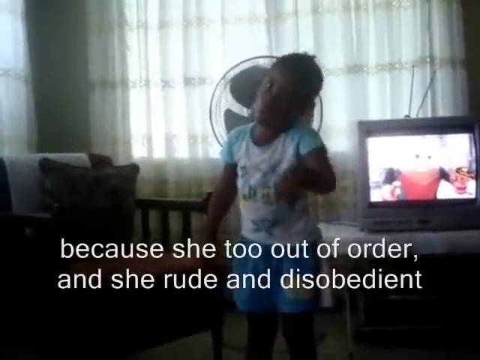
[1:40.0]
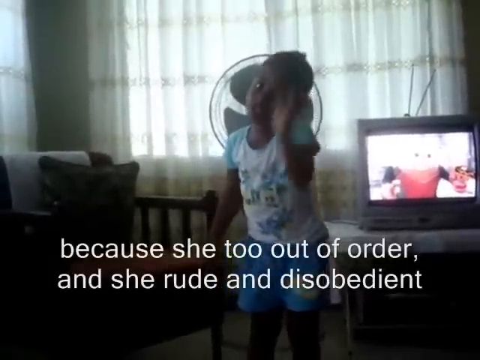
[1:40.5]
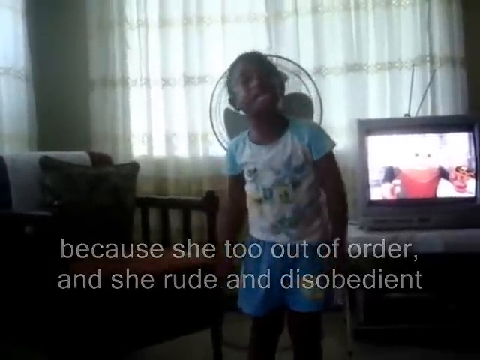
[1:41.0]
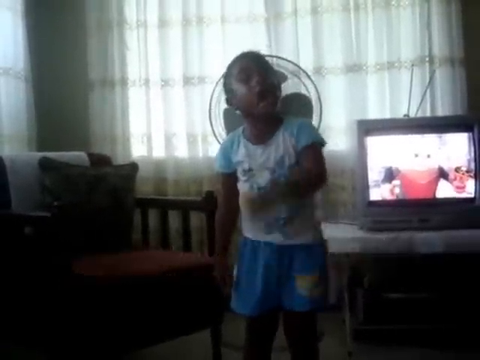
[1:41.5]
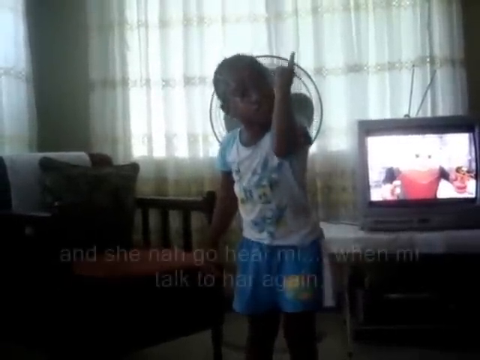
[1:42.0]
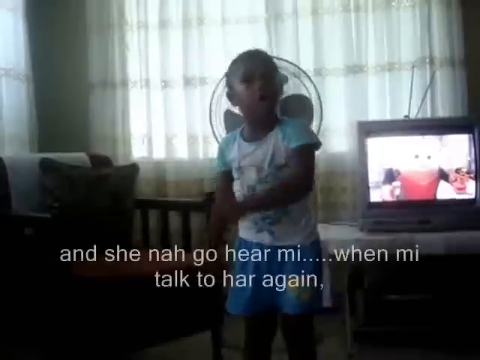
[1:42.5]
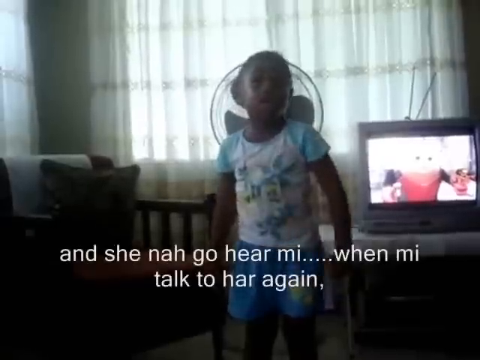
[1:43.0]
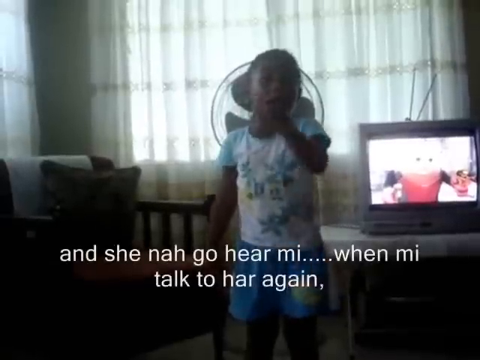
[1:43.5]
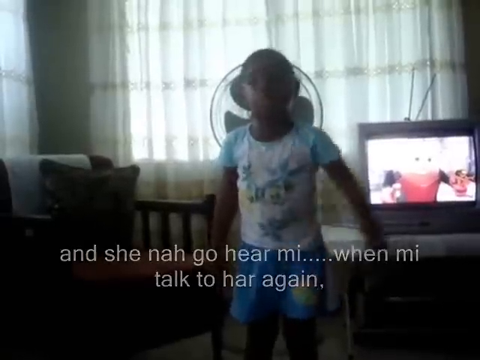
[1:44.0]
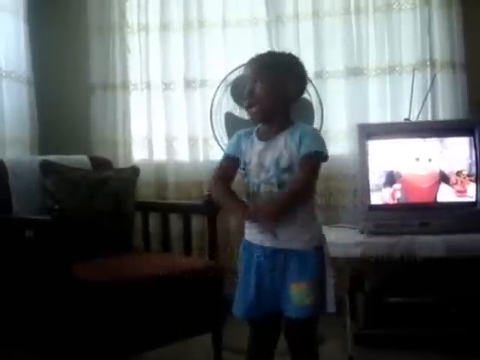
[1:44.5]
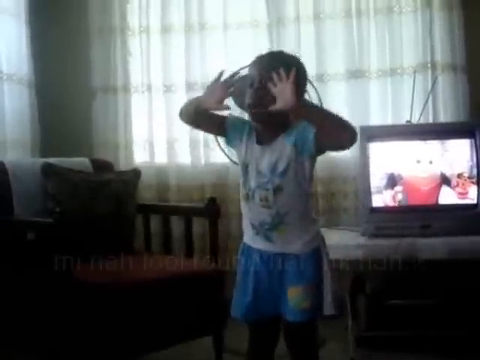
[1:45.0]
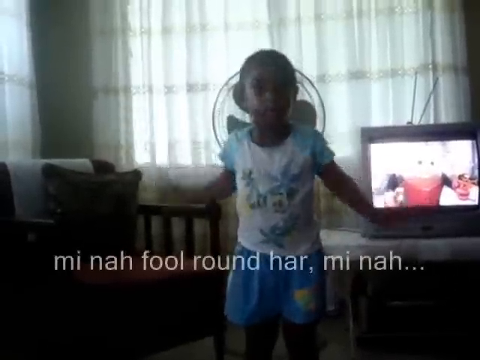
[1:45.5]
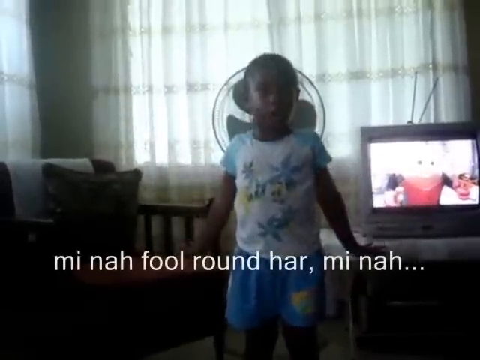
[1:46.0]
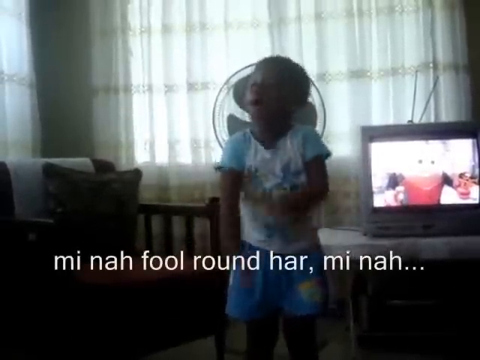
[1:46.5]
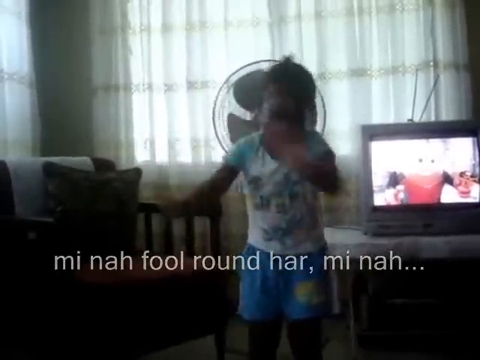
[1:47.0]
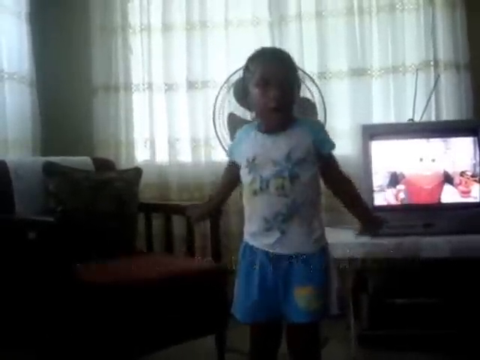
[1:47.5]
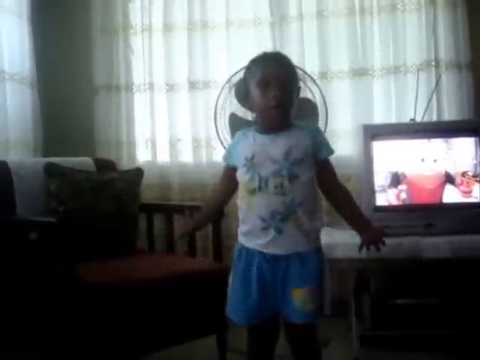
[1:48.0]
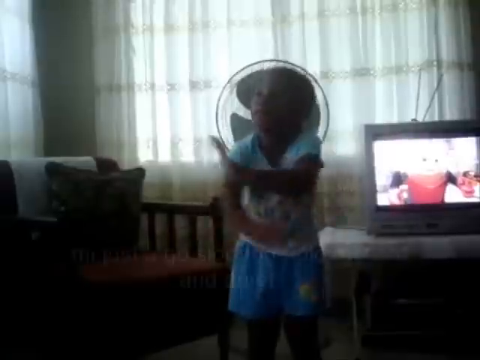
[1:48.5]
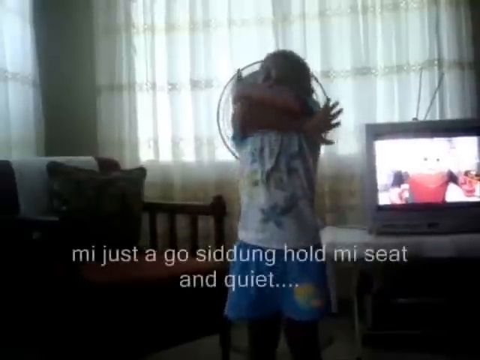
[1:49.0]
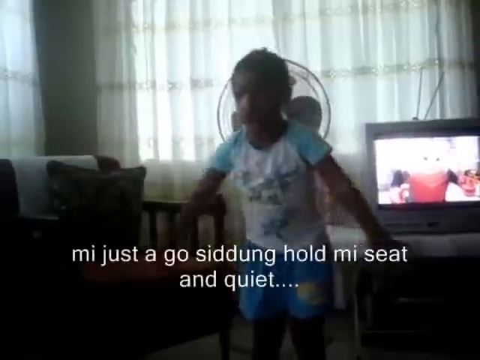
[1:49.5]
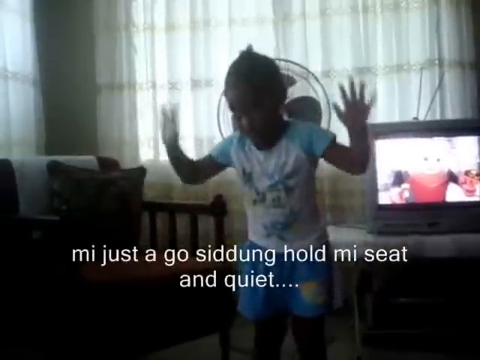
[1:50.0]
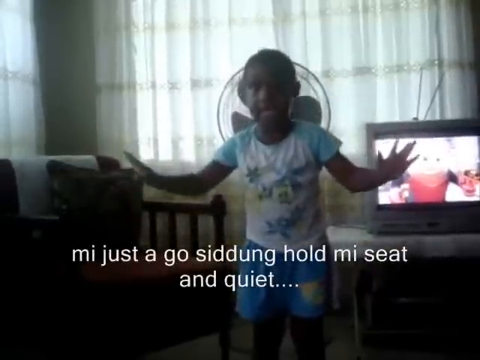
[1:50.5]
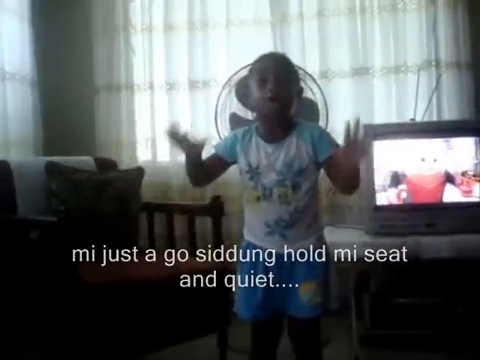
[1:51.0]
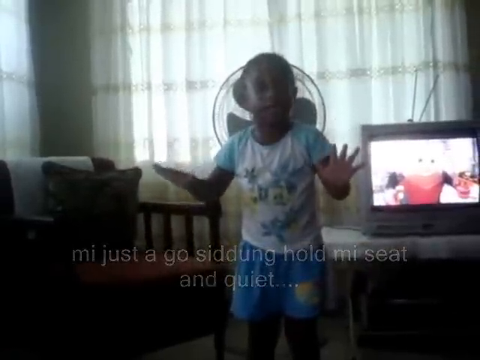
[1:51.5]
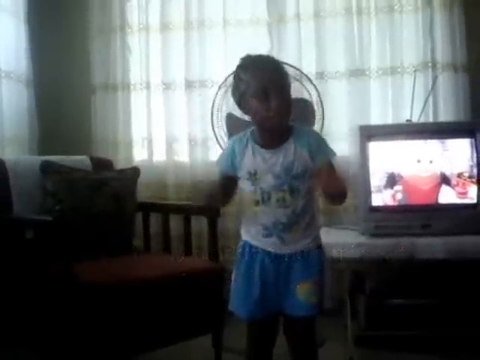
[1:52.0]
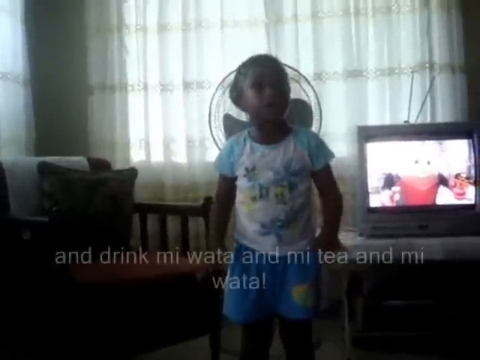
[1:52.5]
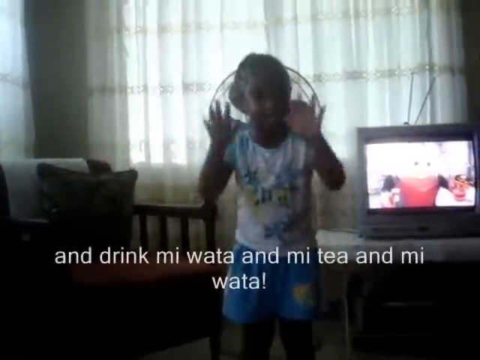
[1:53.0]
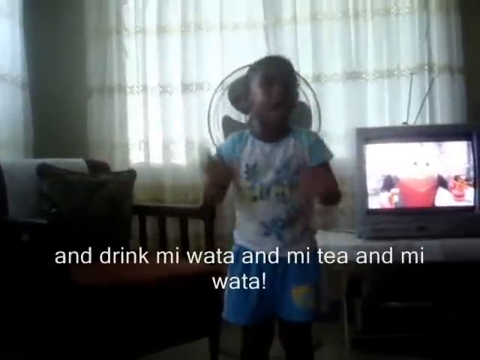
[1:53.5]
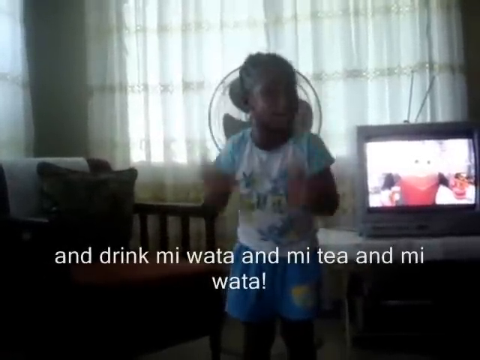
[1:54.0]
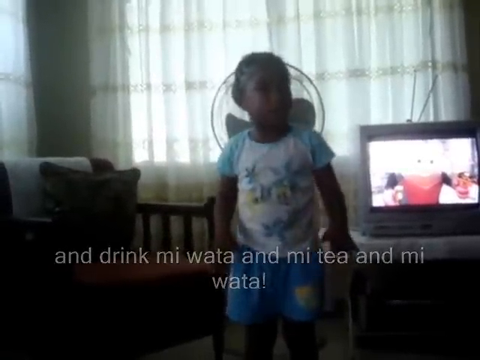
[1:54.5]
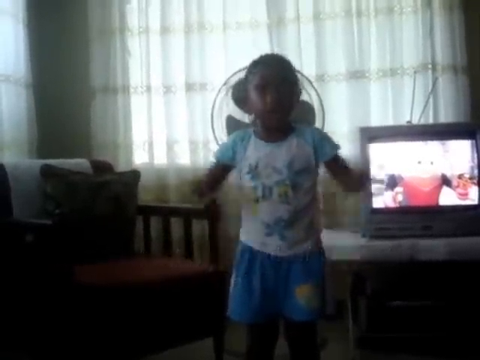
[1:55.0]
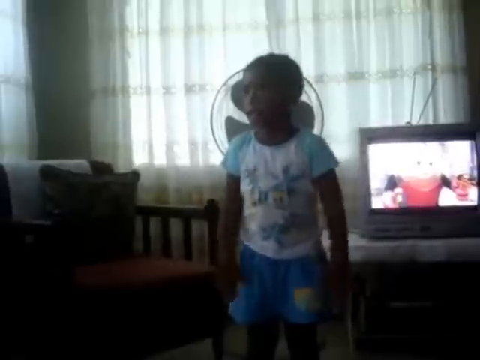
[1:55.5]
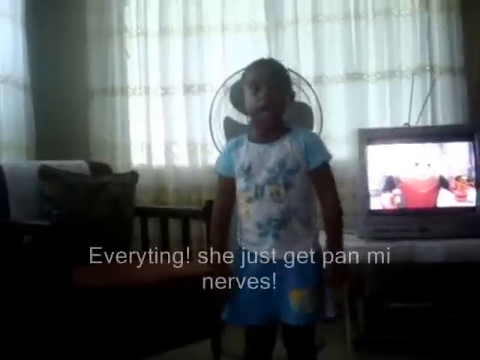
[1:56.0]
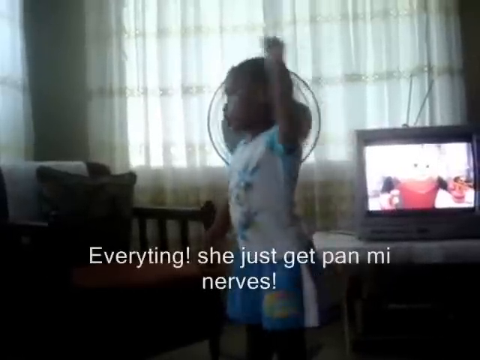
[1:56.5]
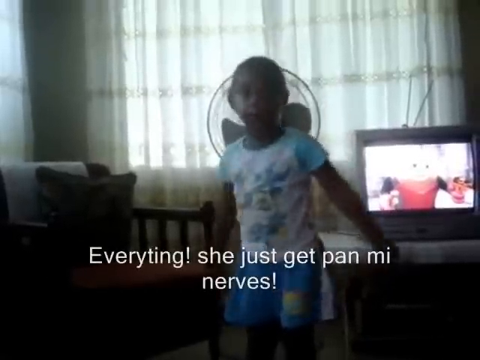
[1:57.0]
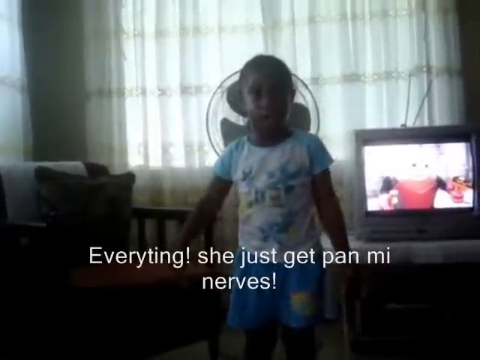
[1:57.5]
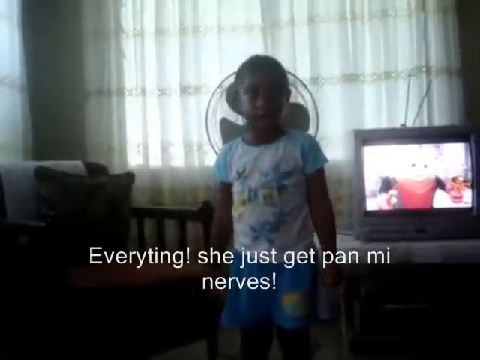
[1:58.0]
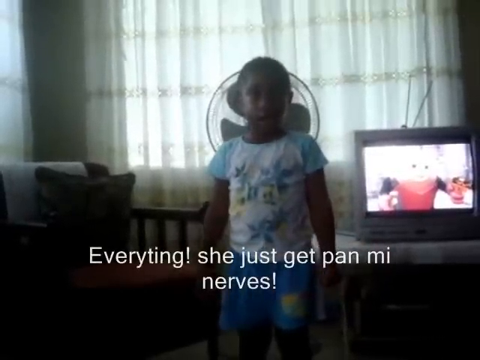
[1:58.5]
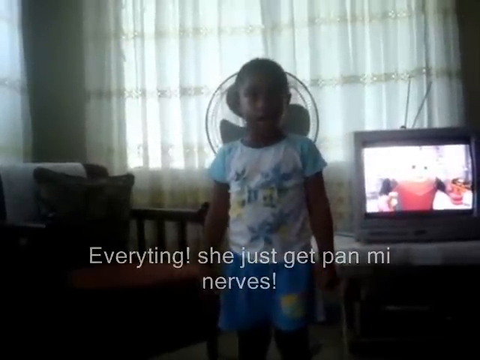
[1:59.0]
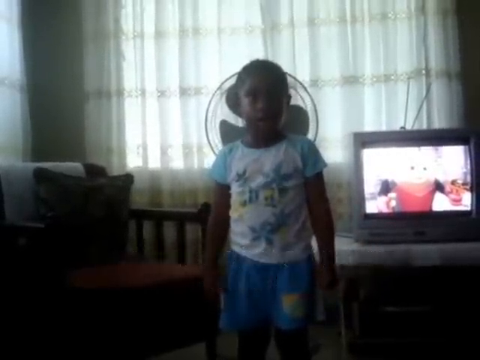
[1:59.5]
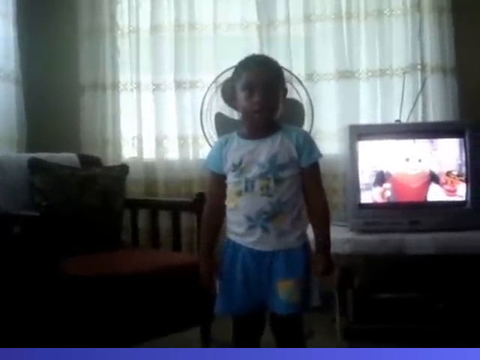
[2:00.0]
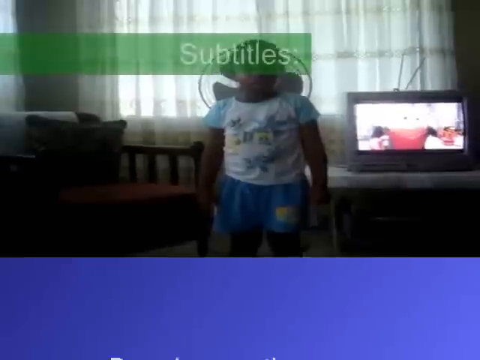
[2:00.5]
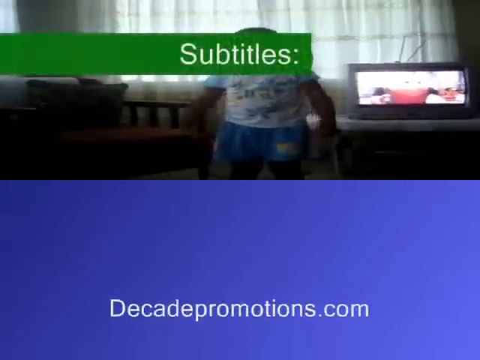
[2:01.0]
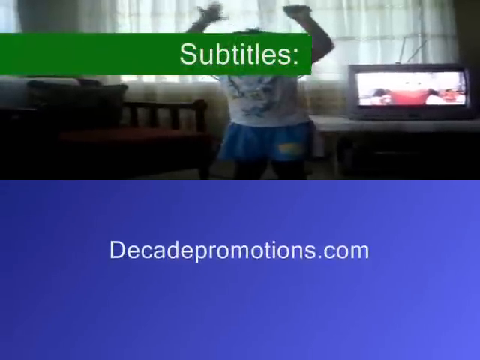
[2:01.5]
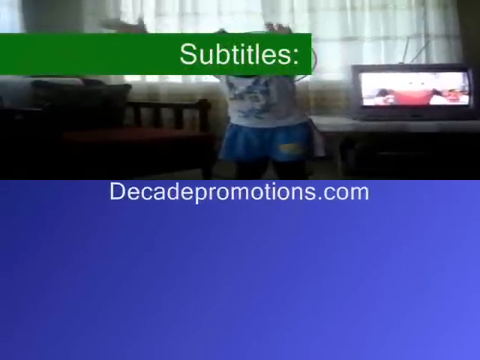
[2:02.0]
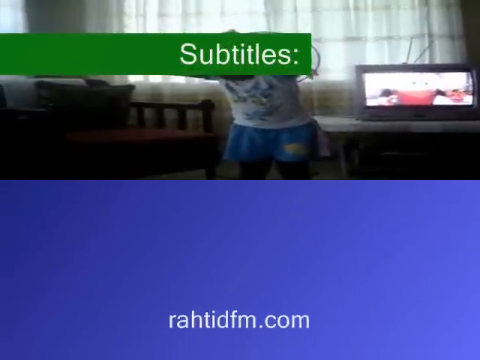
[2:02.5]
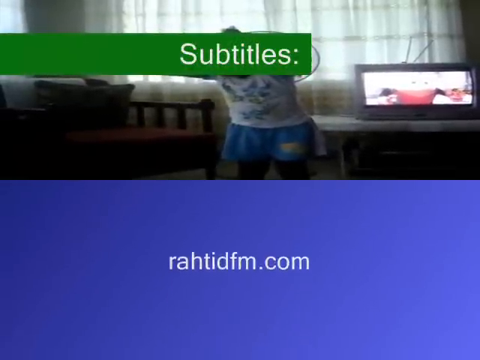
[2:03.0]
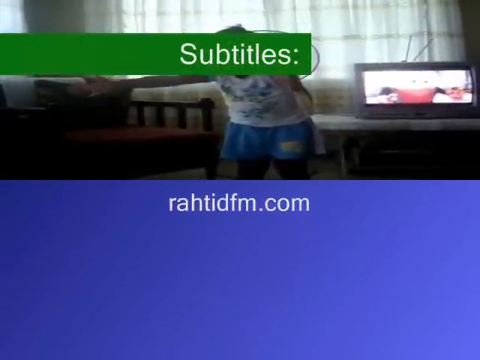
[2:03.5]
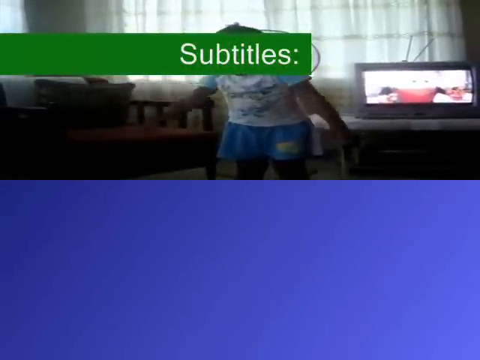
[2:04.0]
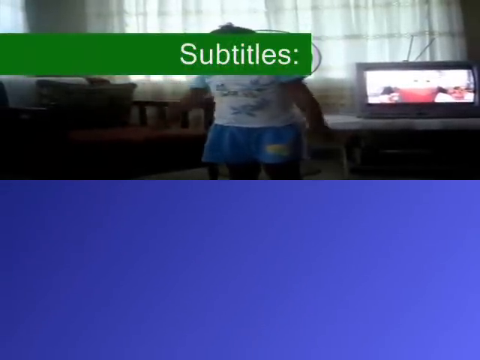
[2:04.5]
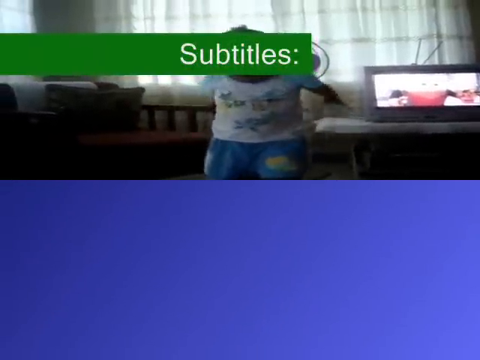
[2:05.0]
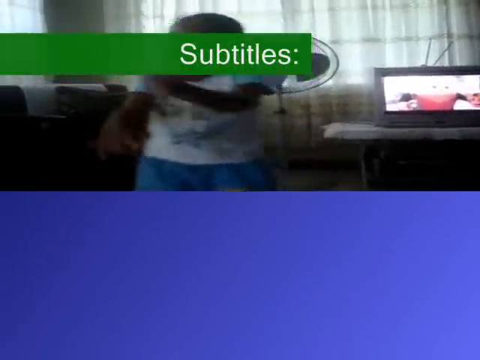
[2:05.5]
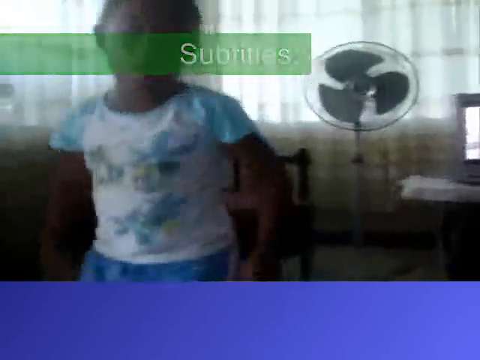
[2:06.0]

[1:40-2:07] The subtitle at the bottom reads "because she too out of order and she rude and disobedient" over the girl as she crosses her arms over her body and throws them down at her sides, repeatedly. She erratically shakes her head as if saying no, all while frantically speaking to whoever is filming. Her torso bends forward and back as she moves her arms up and down and shakes her head. Eventually, white text over a green box appears that says "subtitles", with a blue overlay on the lower half taking up half of the screen. The scene stays in the dimly lit room as she yells.